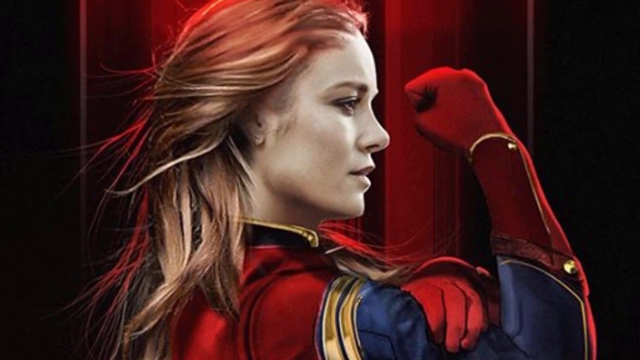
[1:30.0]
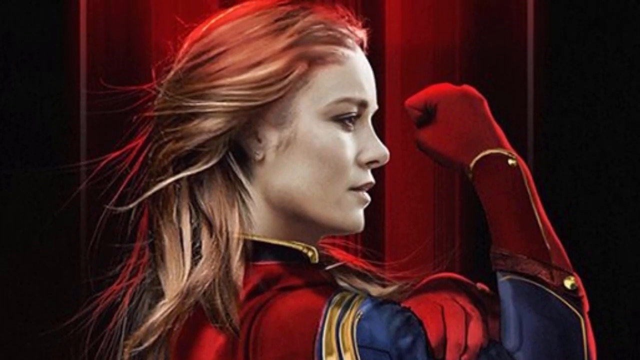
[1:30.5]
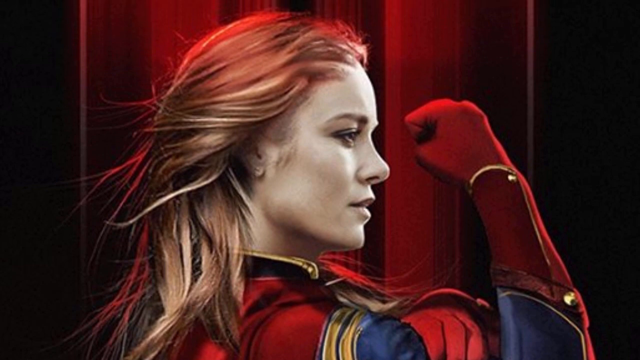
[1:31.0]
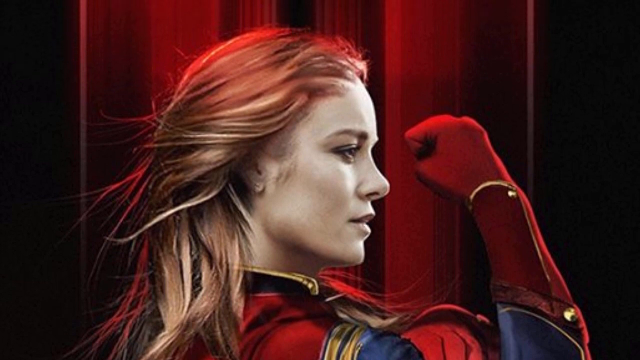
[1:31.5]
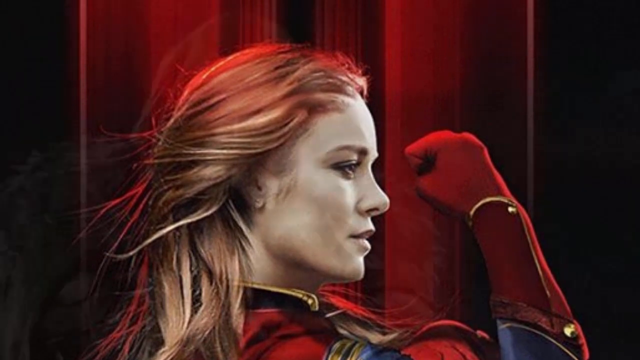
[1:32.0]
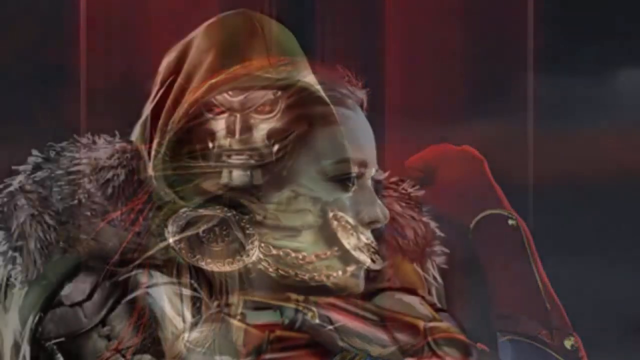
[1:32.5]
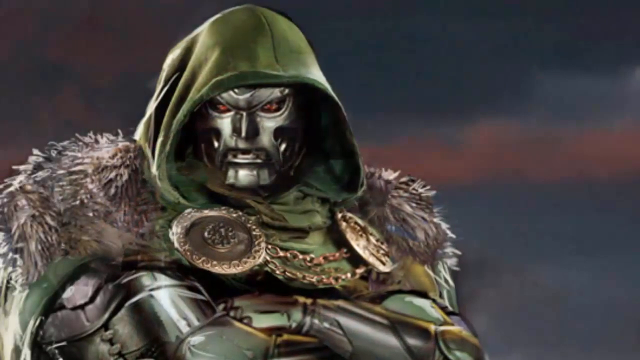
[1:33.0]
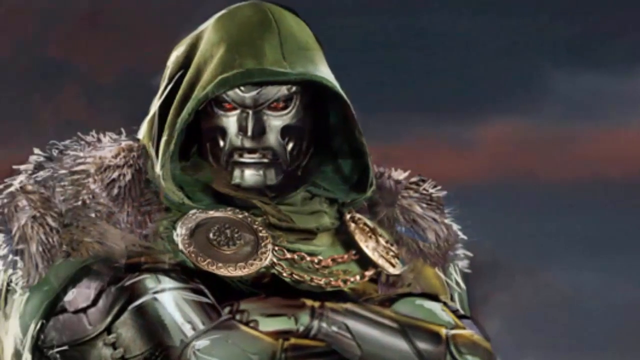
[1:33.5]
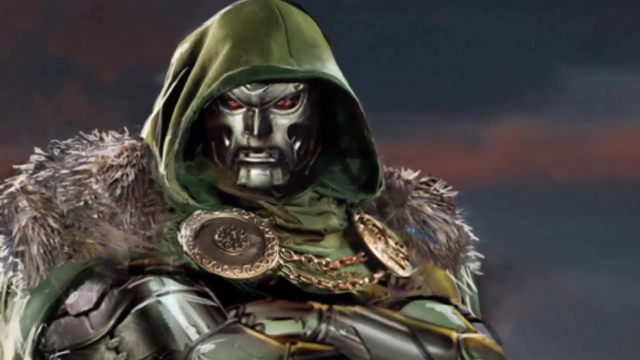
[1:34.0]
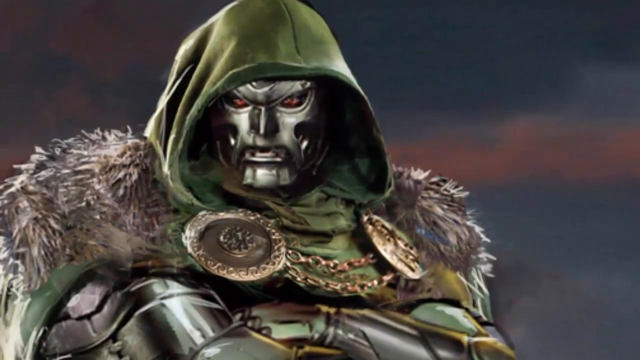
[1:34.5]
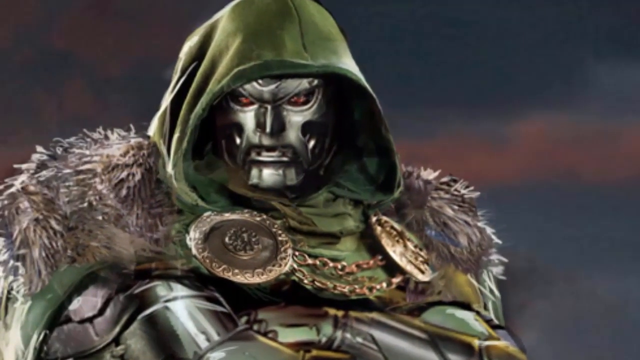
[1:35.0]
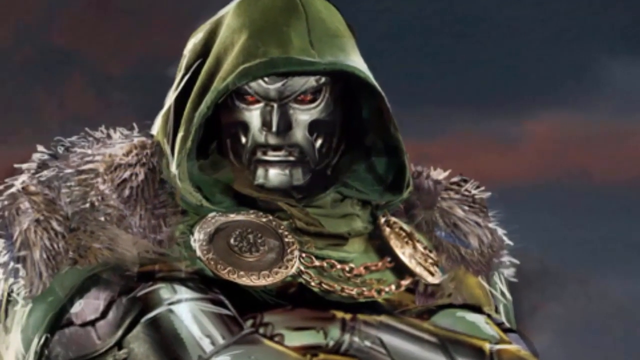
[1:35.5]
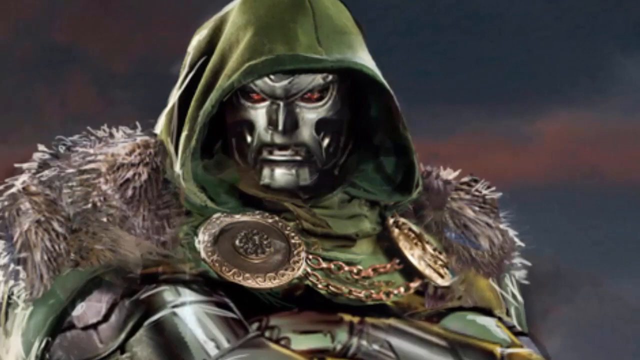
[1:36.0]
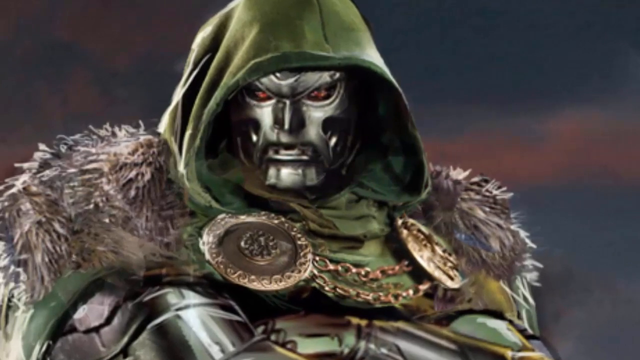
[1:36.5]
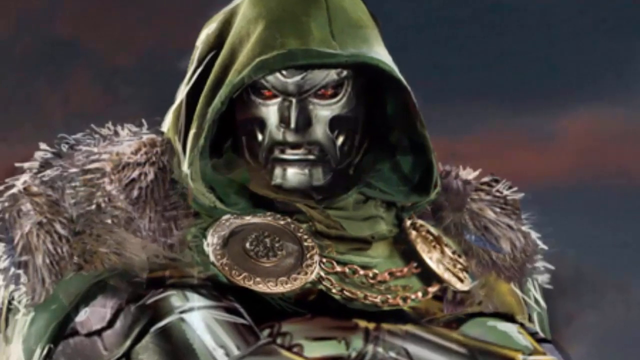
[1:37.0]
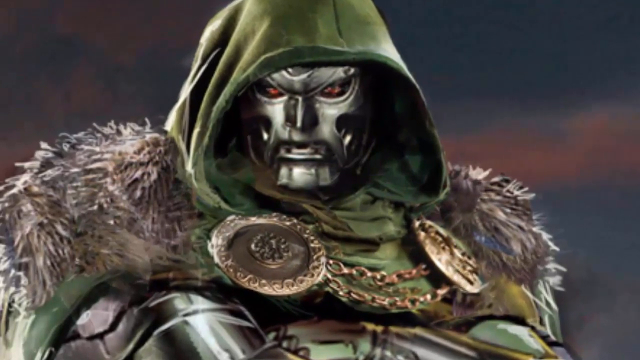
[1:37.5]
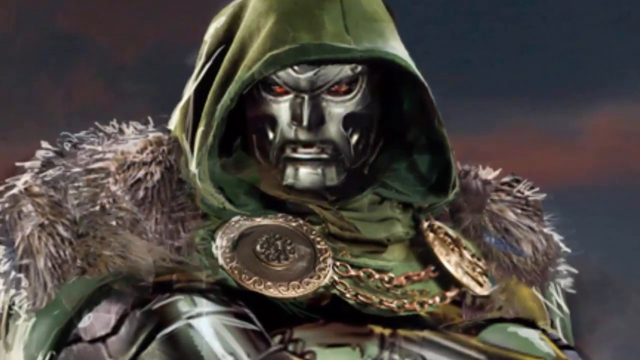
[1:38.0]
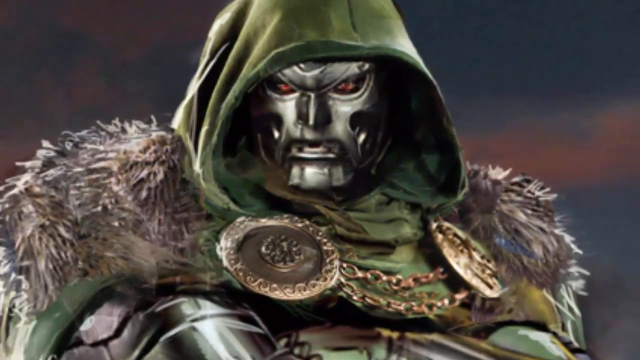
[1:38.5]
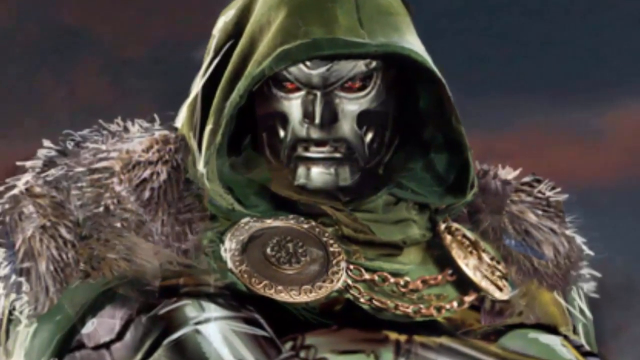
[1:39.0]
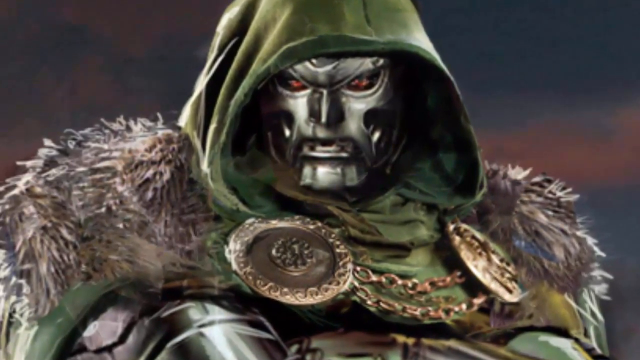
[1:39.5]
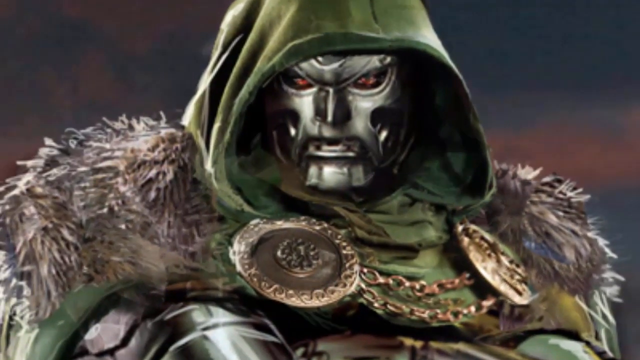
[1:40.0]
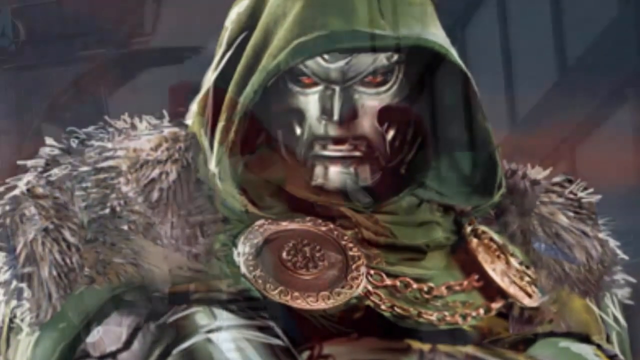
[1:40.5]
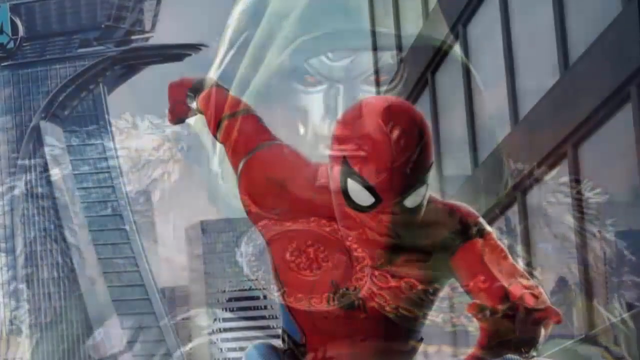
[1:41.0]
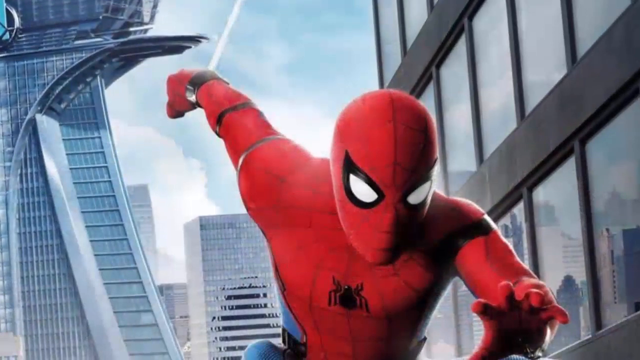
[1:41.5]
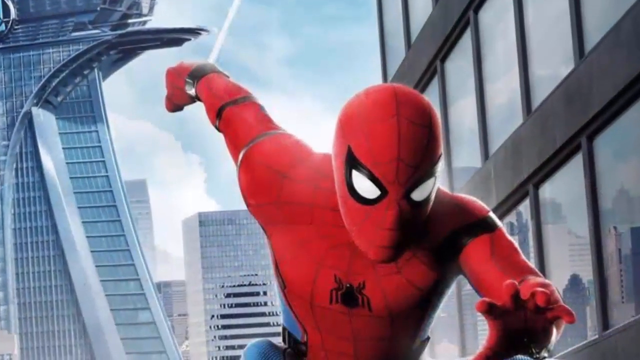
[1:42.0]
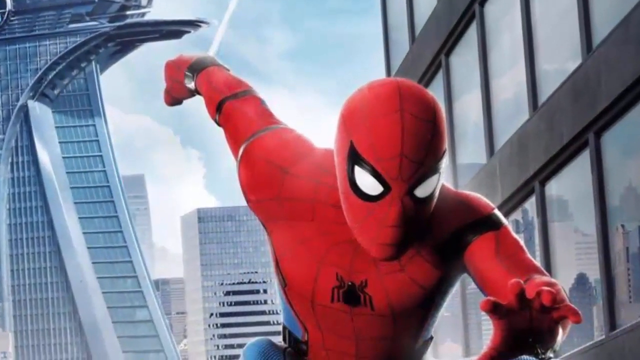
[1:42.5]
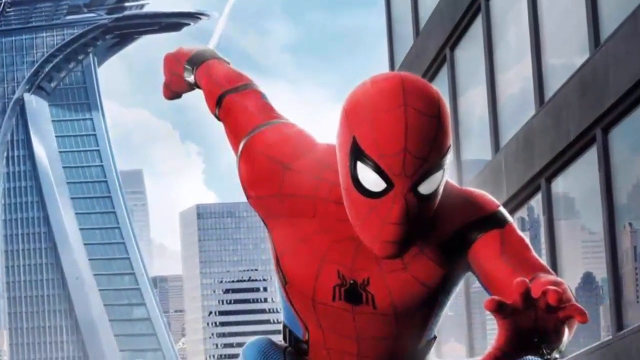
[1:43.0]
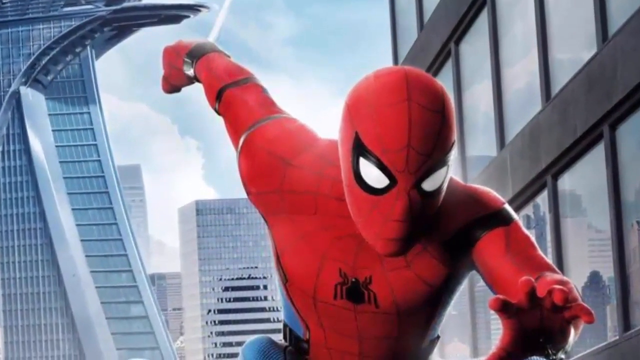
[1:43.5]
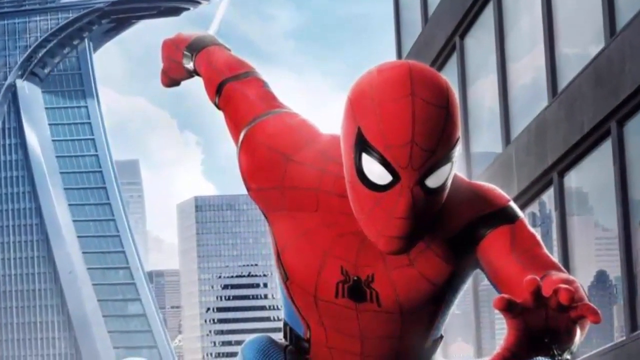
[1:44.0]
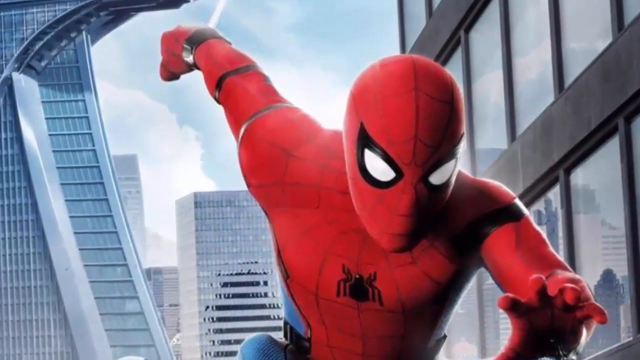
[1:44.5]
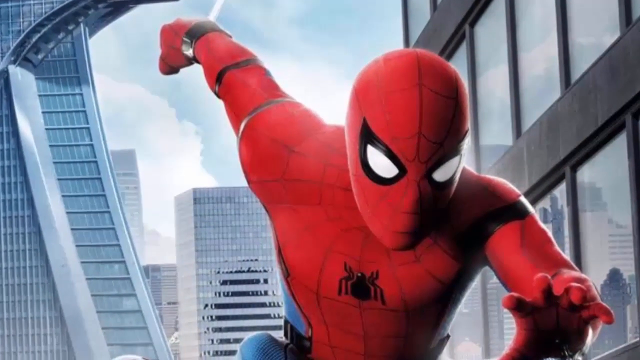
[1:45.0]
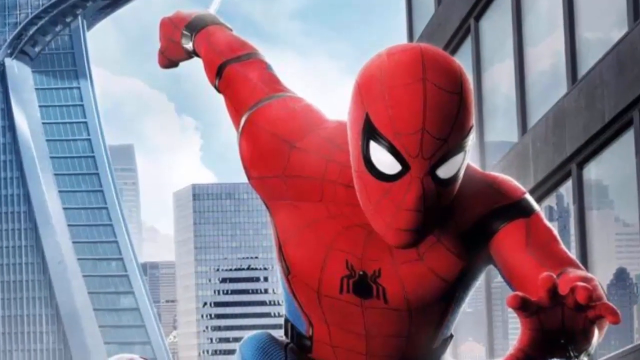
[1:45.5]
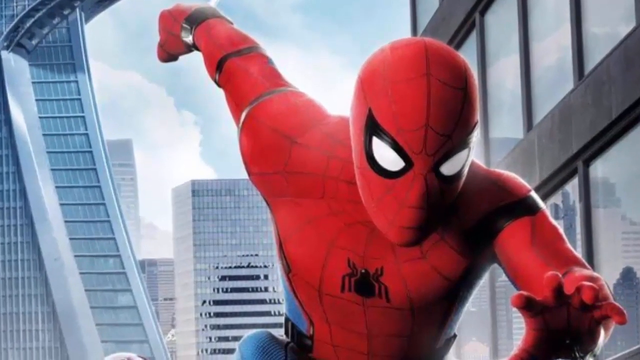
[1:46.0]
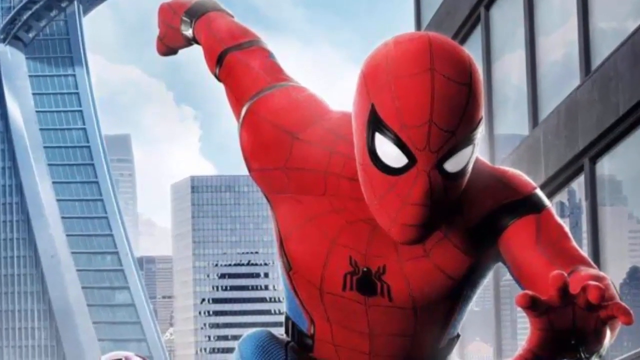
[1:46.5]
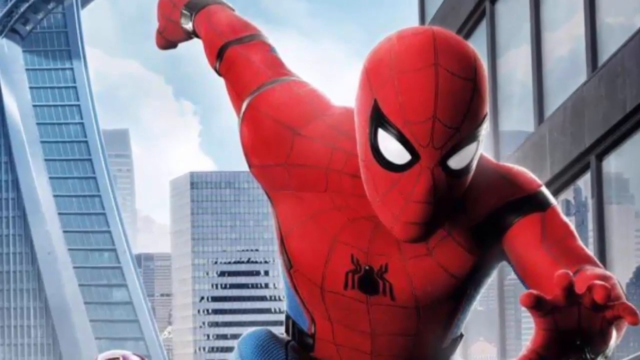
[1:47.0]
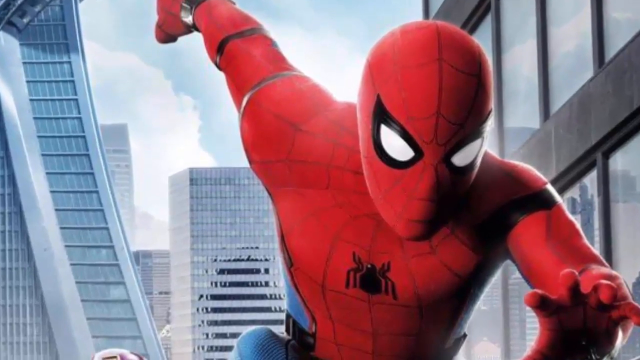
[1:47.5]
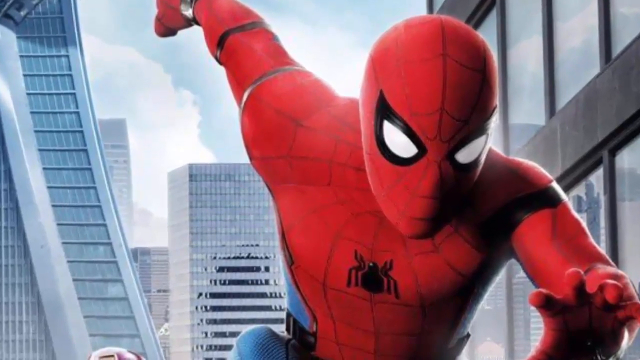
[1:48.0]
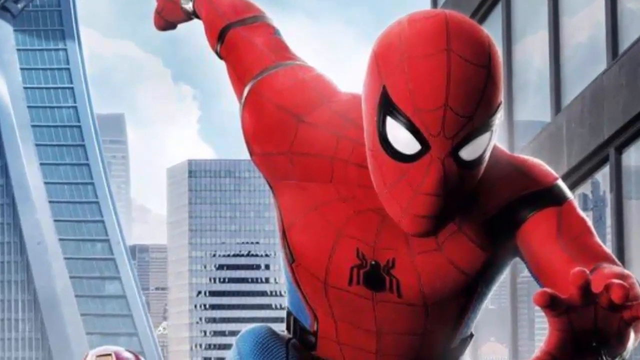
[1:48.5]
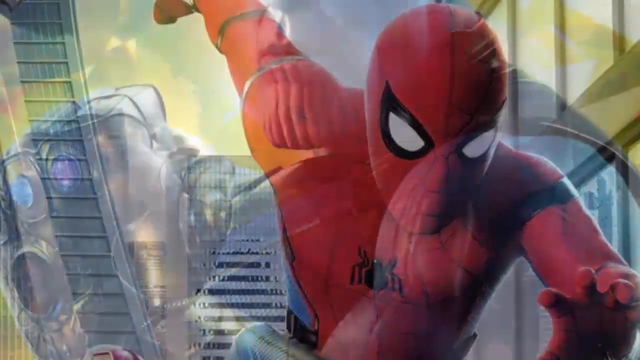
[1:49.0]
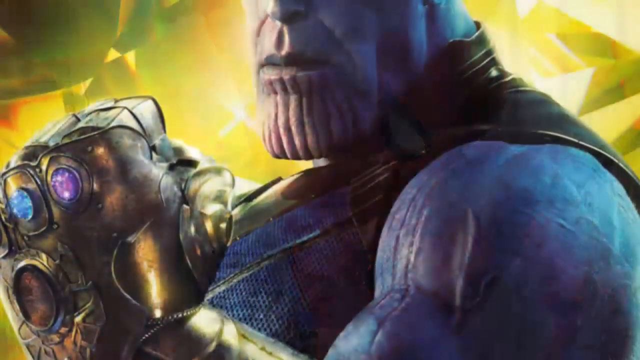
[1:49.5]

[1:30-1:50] A female superhero wears a costume with red, blue and gold accents. She is white, with medium-to-long reddish blonde hair reaching the middle of her back. The video moves to a villain with a silver face, a greenish hood, fur on his shoulders, and metal on his chest that attaches the jacket over his shoulders. He looks very ominous and stands behind a pink and dark gray sky. The image moves closer and closer to his face, showing red eyes; he is very angry. Next is Spider-Man in his traditional red suit, in the middle of a city, stringing out some web. He stands next to several skyscrapers, and the view moves closer and closer to his face. Then comes a blue superhero standing against a yellow background with some type of machinery next to him.